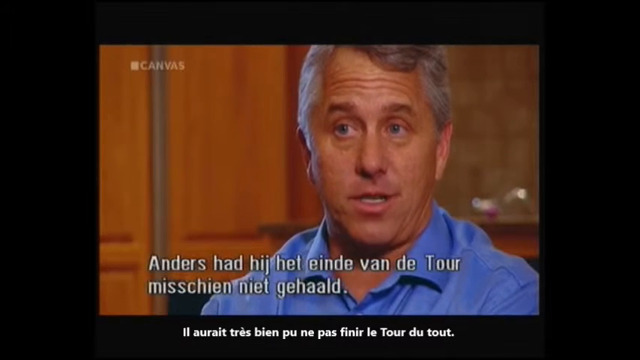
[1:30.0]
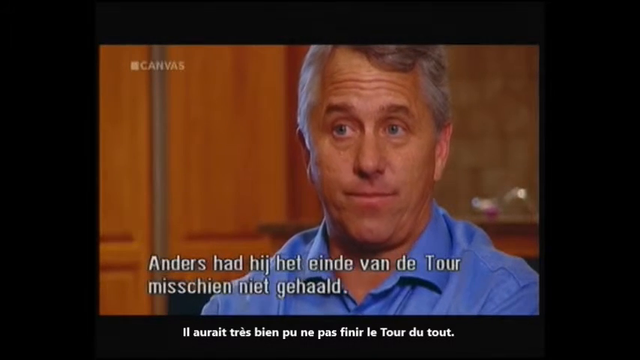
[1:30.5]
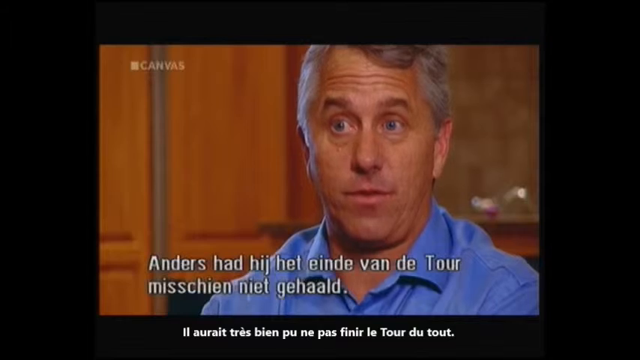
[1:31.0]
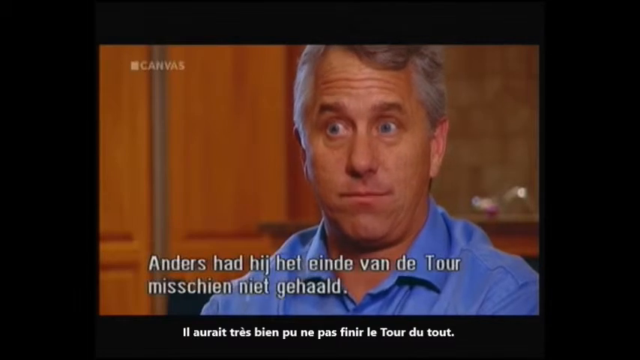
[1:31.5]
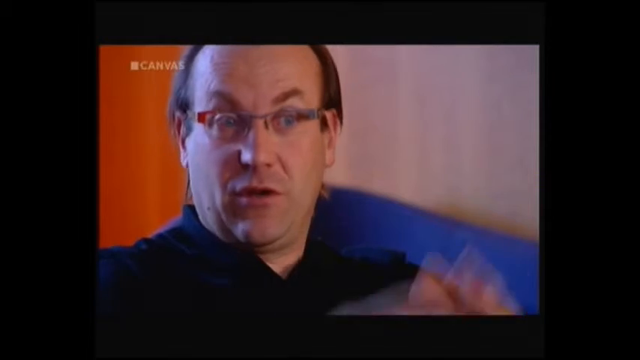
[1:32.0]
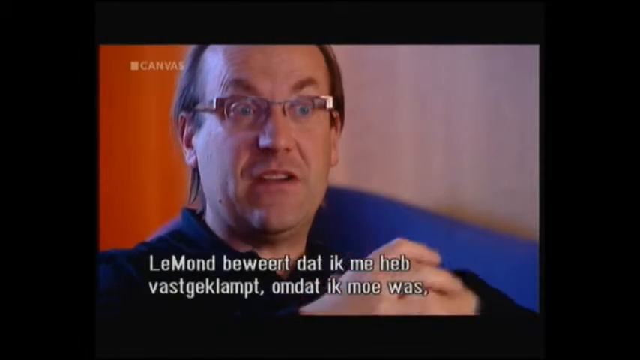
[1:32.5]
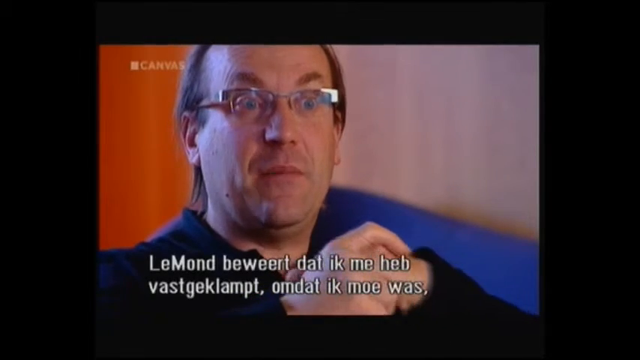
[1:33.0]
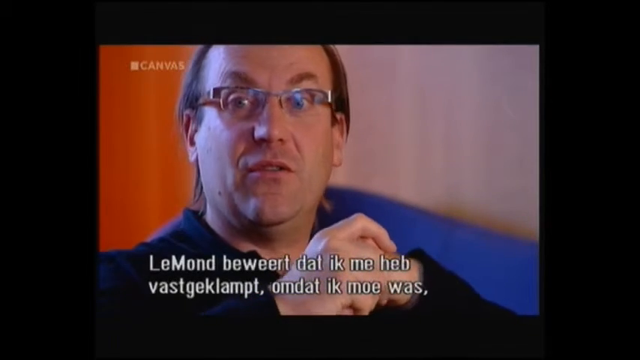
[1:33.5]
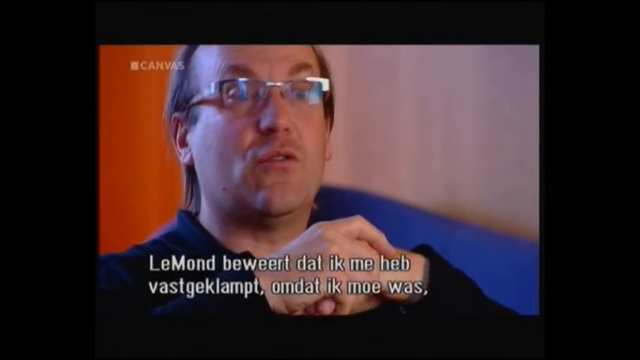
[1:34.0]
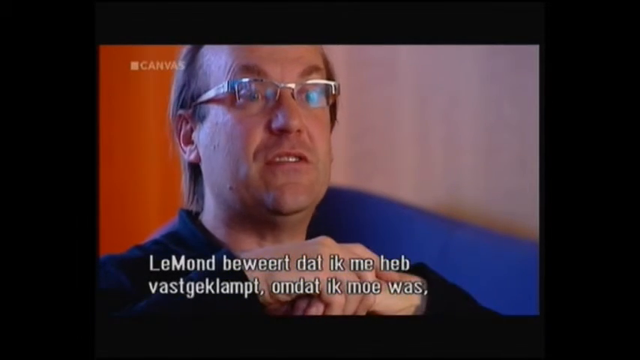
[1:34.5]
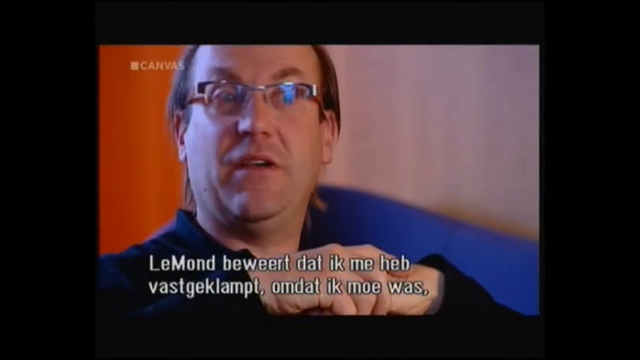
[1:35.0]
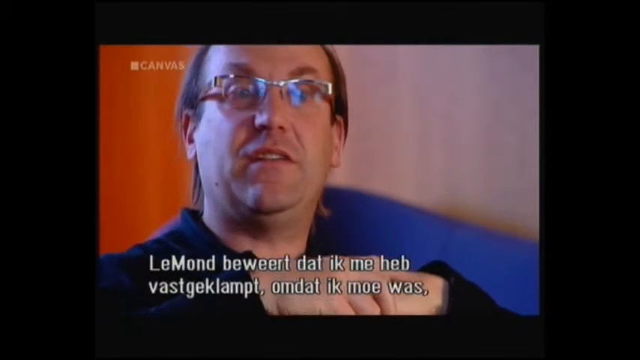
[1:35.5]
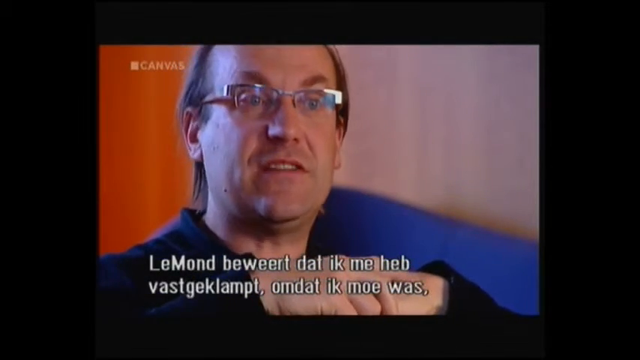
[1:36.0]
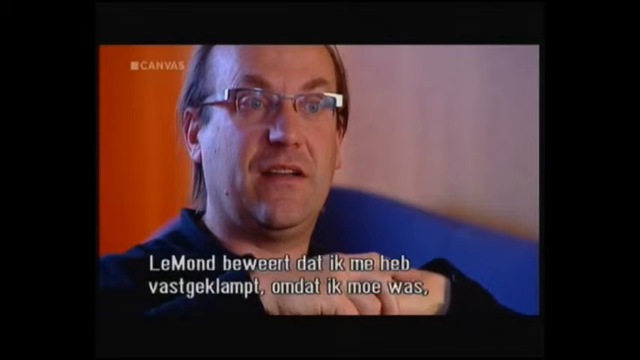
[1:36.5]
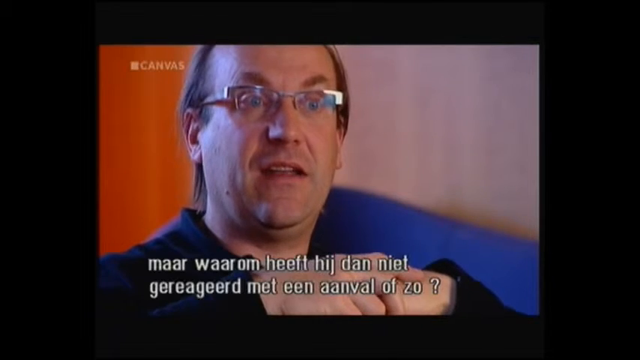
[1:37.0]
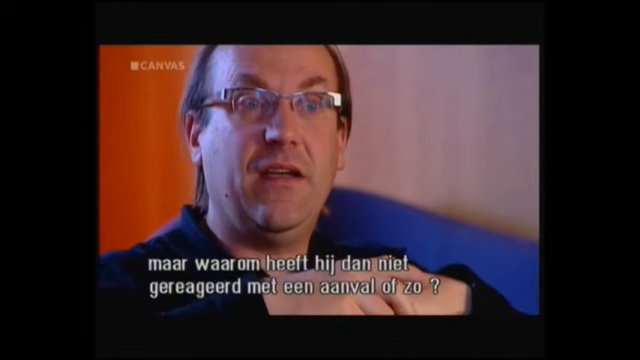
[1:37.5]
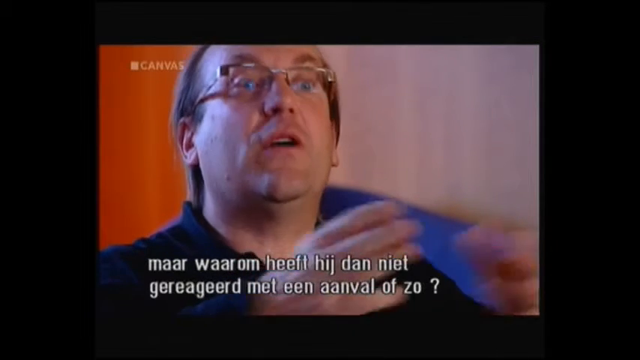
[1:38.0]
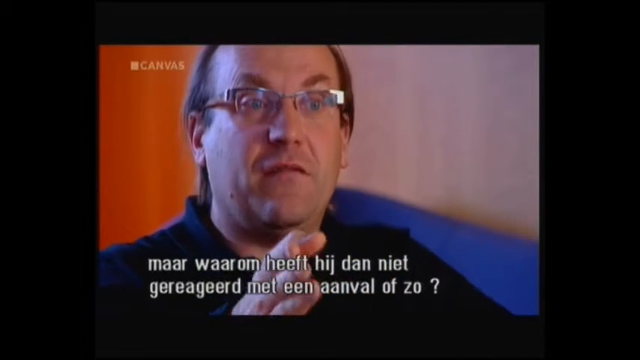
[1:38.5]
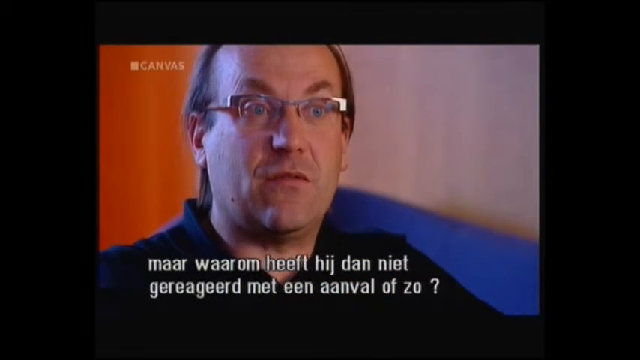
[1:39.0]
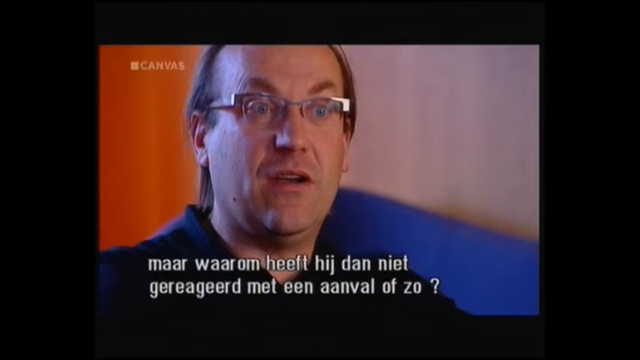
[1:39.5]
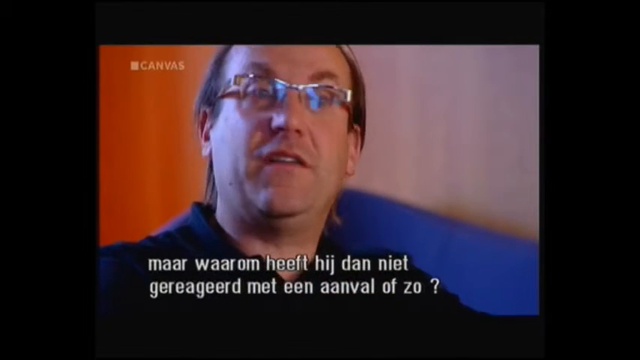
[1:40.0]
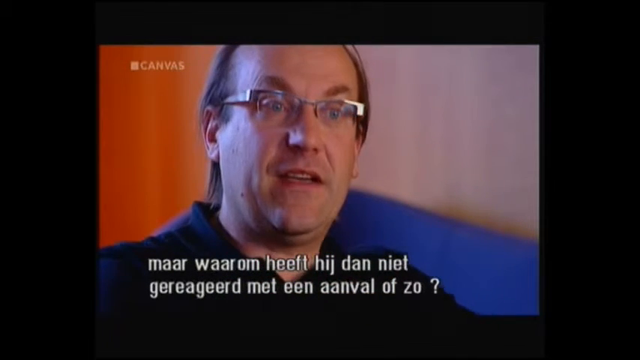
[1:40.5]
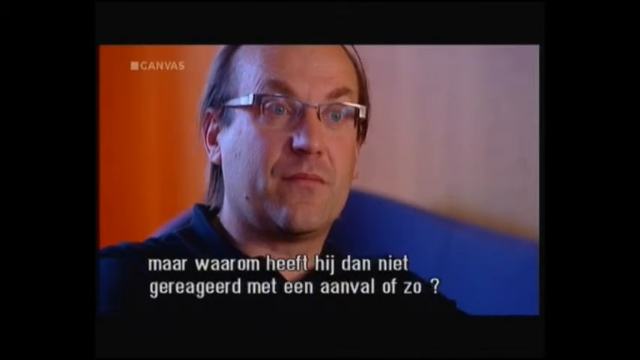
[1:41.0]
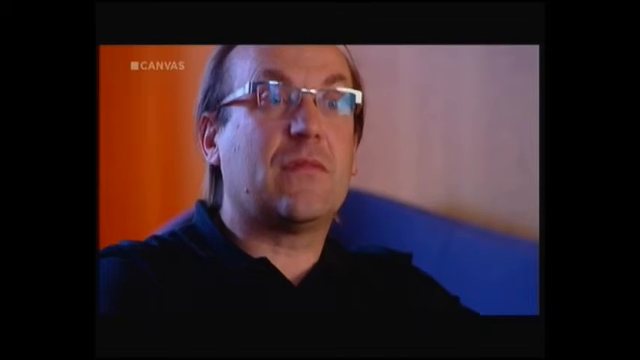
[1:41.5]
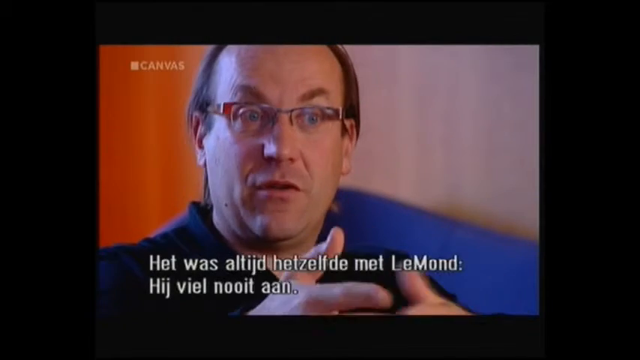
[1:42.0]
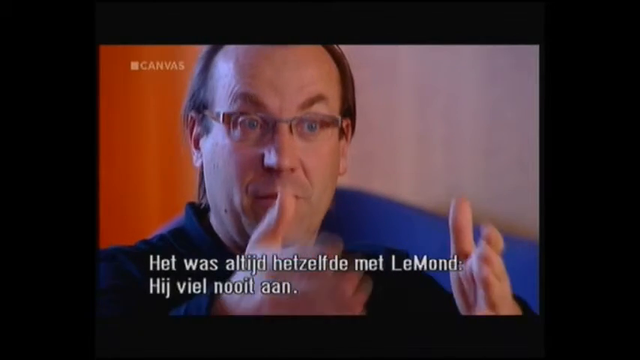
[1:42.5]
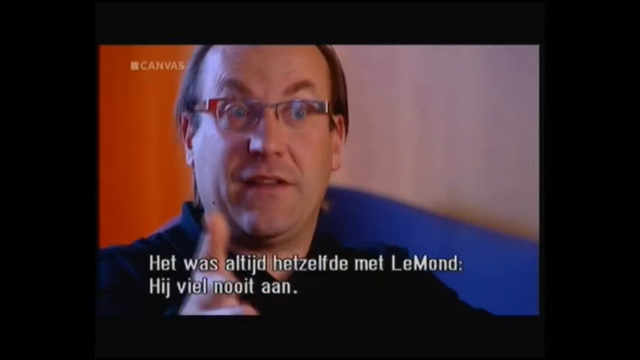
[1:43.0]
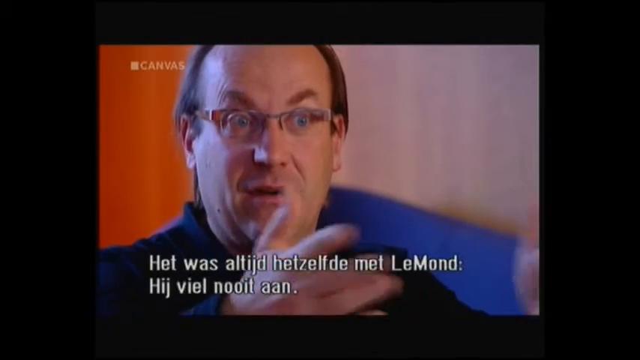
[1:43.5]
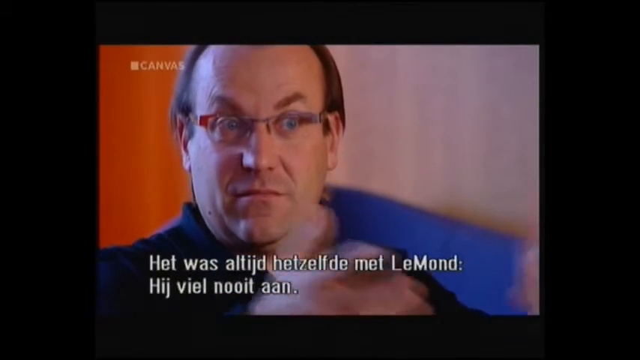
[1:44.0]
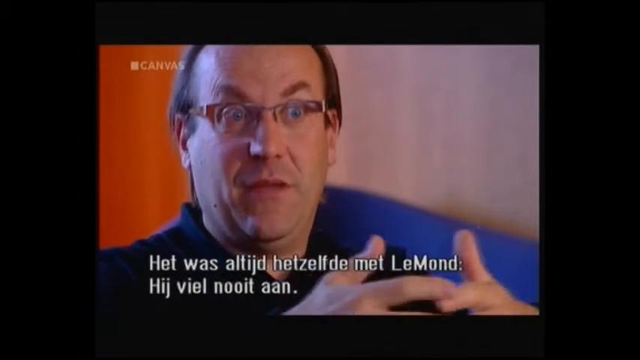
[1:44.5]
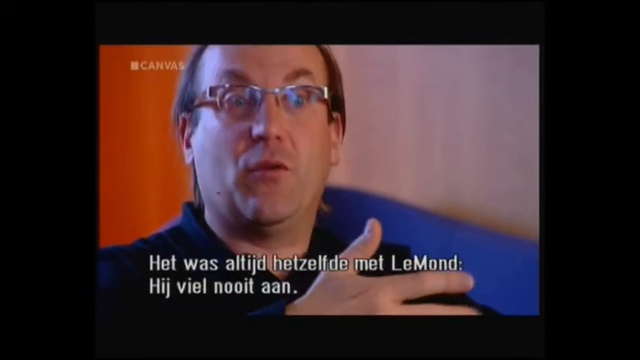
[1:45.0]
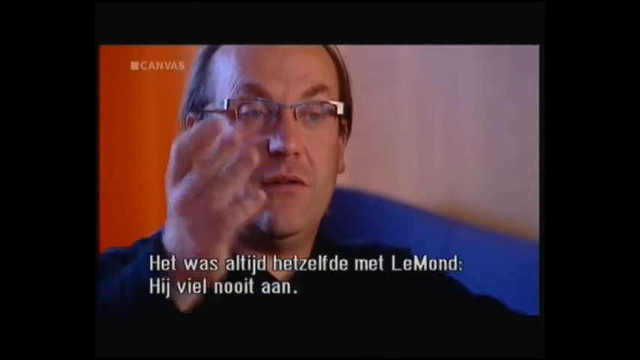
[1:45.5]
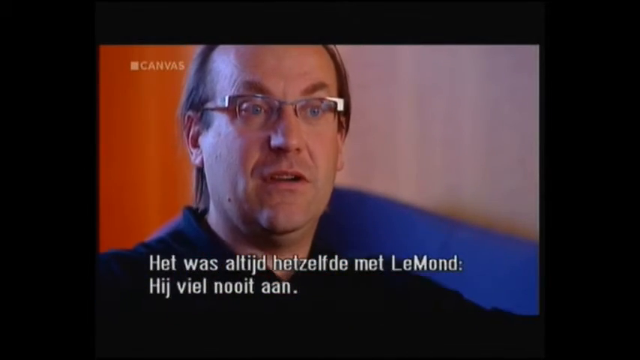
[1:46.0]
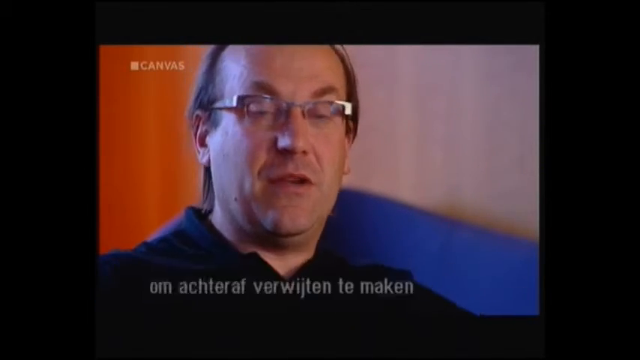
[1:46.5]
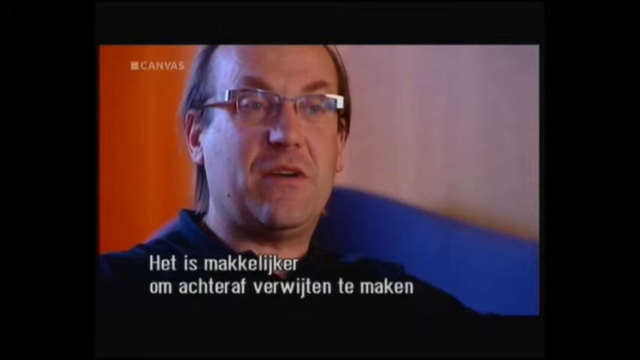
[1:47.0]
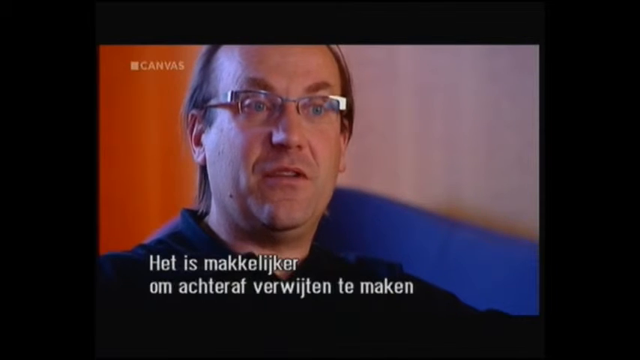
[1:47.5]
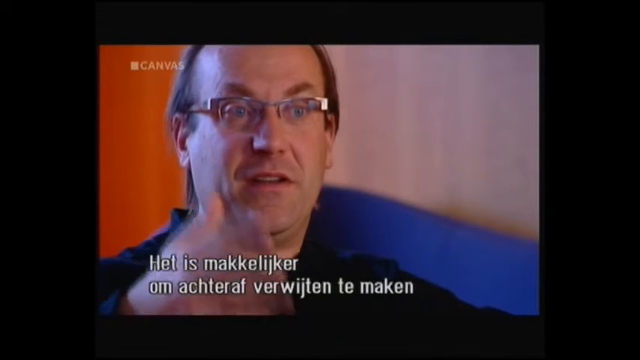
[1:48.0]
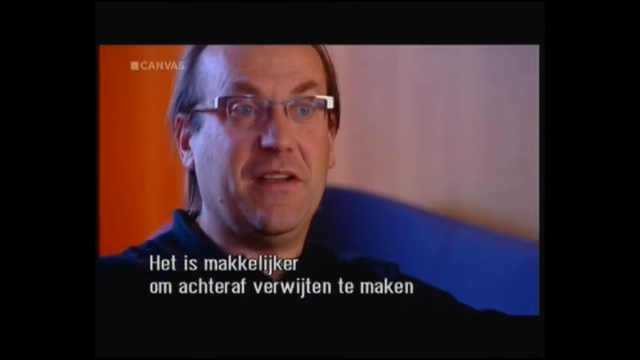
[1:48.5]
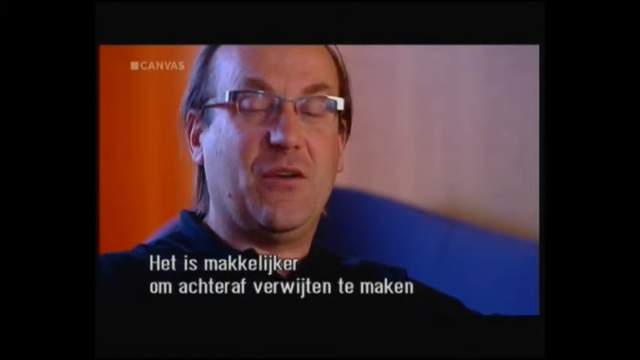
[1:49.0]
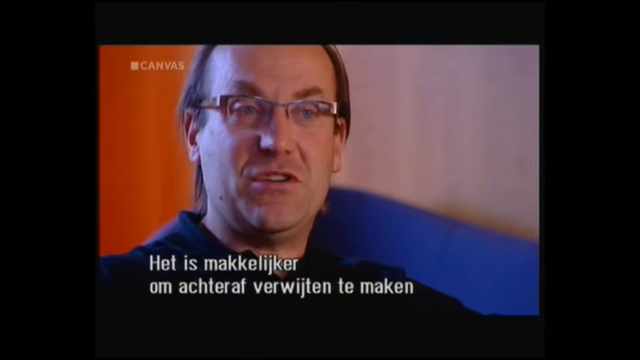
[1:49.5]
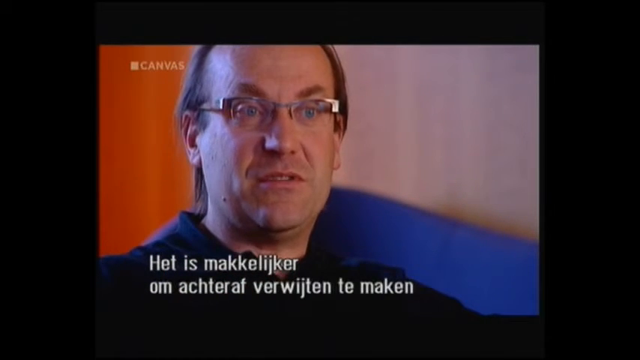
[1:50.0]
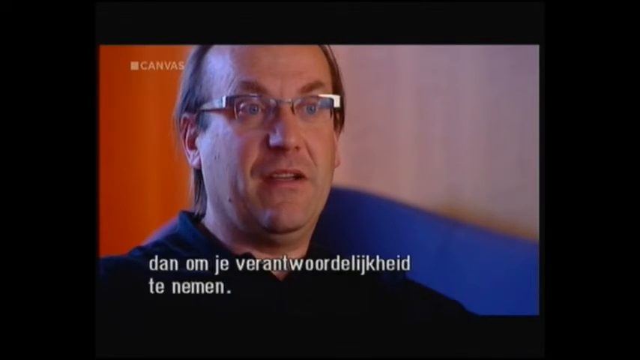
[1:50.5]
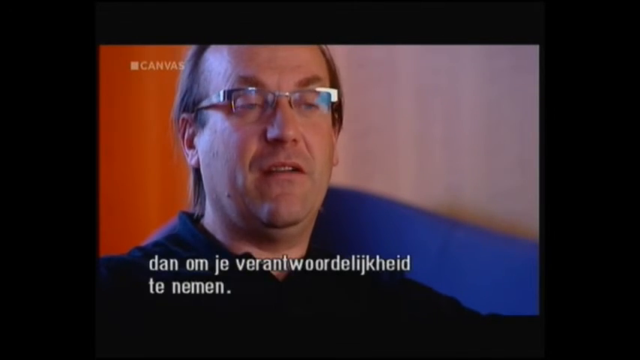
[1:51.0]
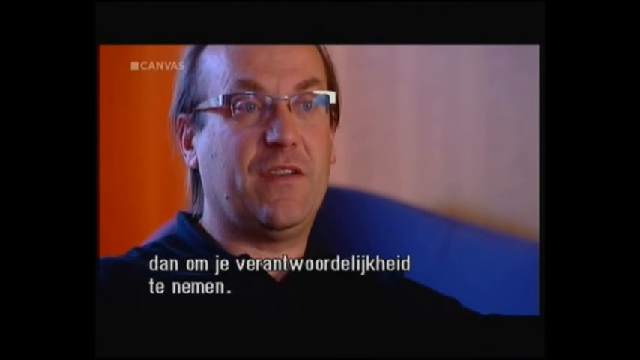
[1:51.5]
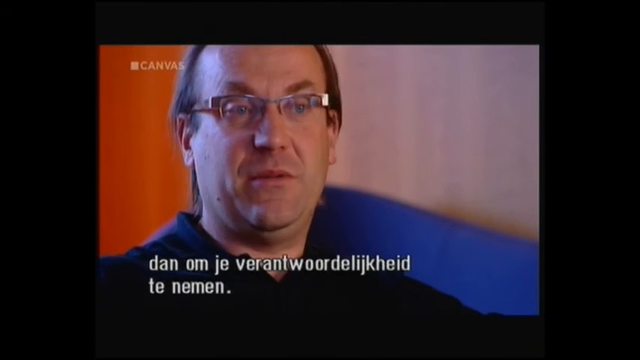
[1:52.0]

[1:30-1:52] The shot is still of the Caucasian man who seems to be in his 50s, with gray hair and a little balding at the front, white skin that looks tanned, and blue eyes. He wears a blue collared shirt, and two sets of subtitles appear at the bottom of the screen: the top set looks like German and the one under it looks like French. From the looks of it the man appears American. With his eyebrows slightly raised, he faces toward the camera while looking slightly to his right at the interviewer, continuing to raise his eyebrows and kind of widening his eyes. The picture then goes back to a different person being interviewed, another middle-aged Caucasian man with some balding at the front of his head and long hair in the back. He wears glasses and a long black-sleeved button-up shirt and has a white complexion without a tan and blue eyes. At the bottom of the screen there seems to be just one set of subtitles, which looks like German. He holds the top of his left hand with his right hand as he speaks, looks to his right a little, then back at the interviewer. He is much more expressive with his hands, moving them around, opening them up, holding the palms facing each other, slowly shaking them, and moving them from side to side and forward and backward.